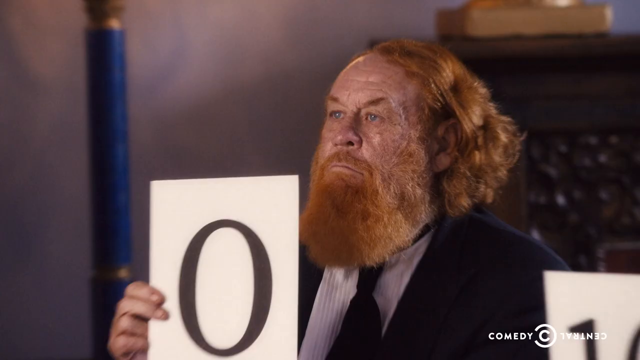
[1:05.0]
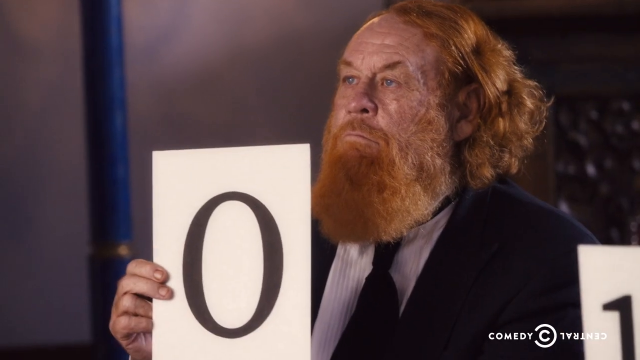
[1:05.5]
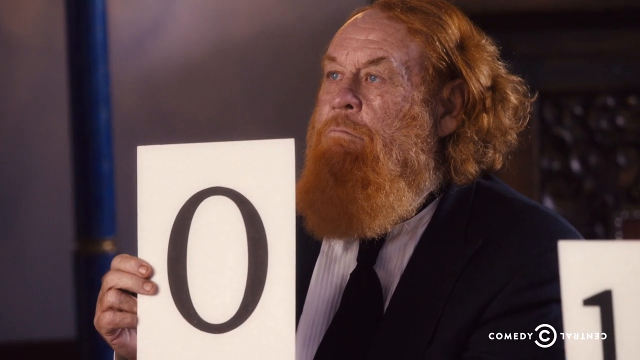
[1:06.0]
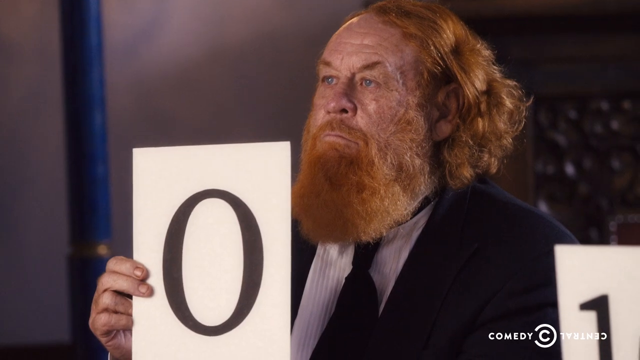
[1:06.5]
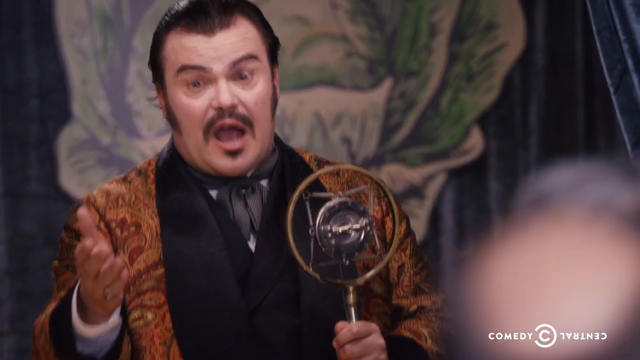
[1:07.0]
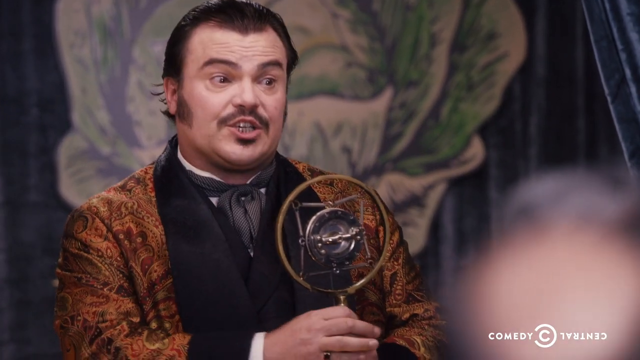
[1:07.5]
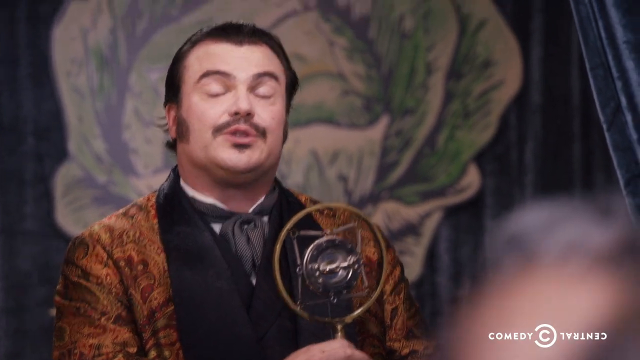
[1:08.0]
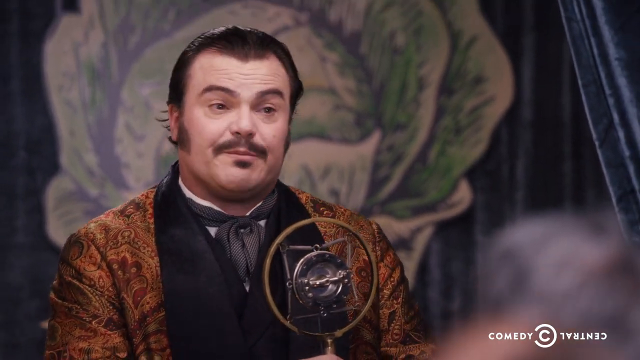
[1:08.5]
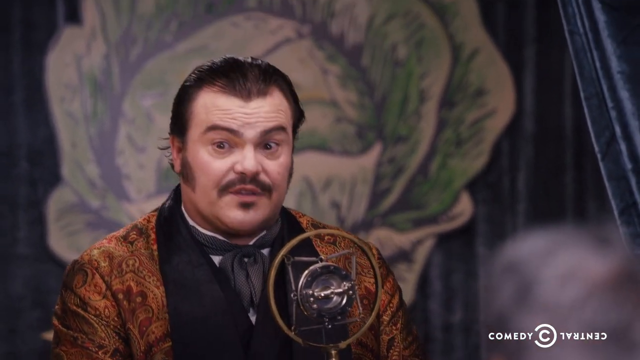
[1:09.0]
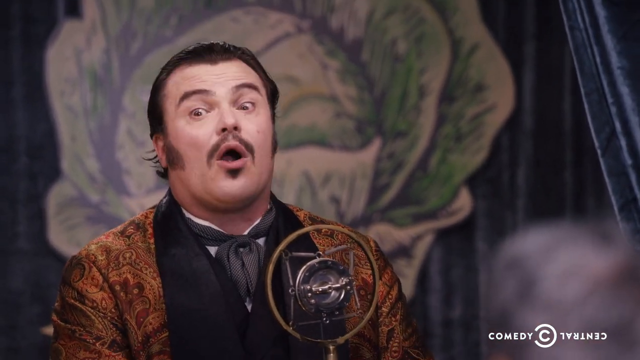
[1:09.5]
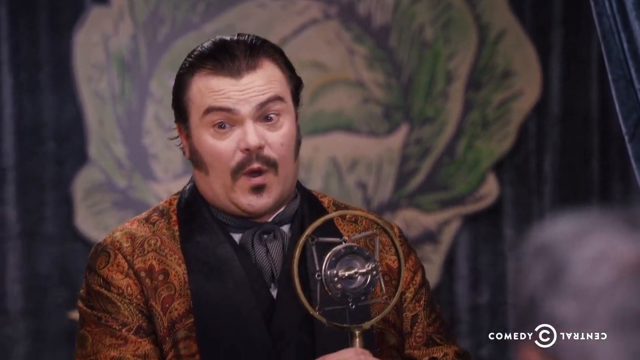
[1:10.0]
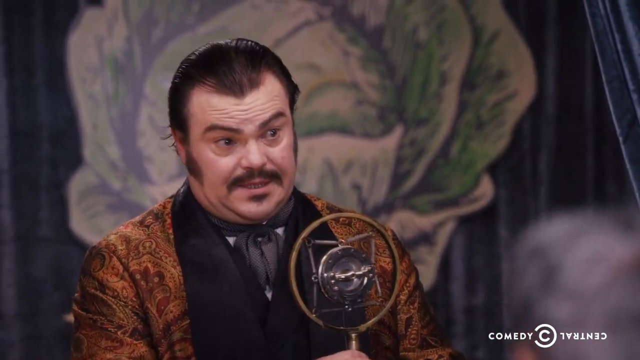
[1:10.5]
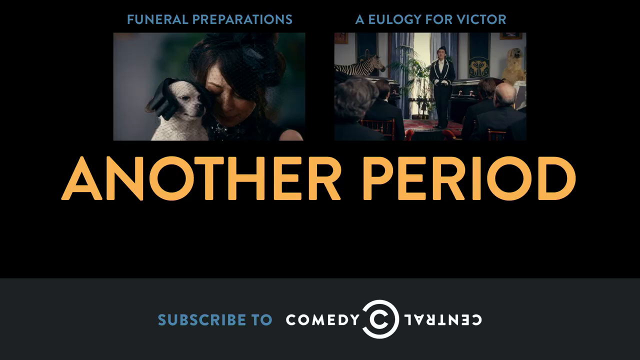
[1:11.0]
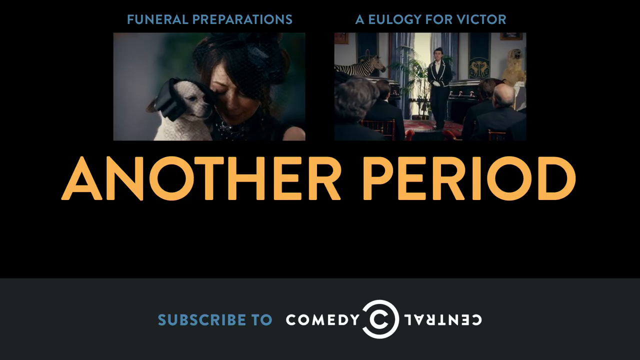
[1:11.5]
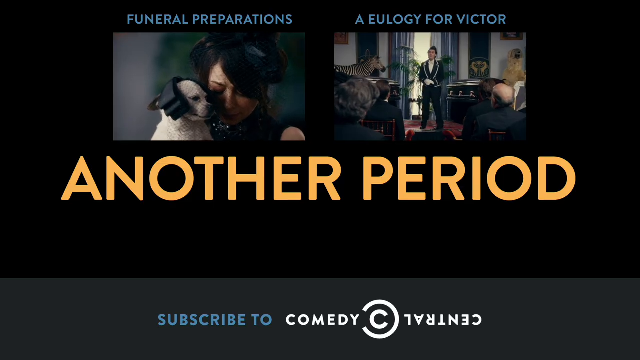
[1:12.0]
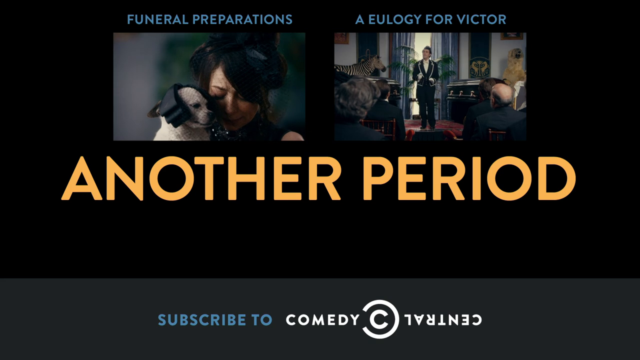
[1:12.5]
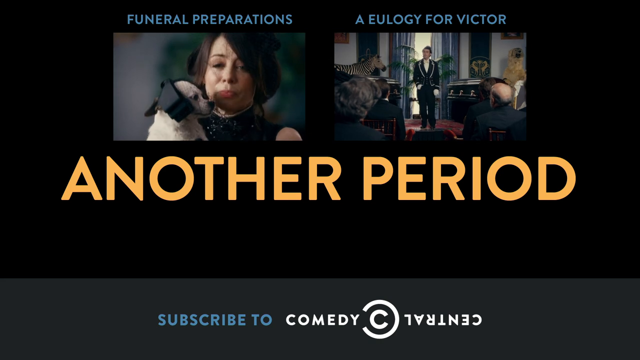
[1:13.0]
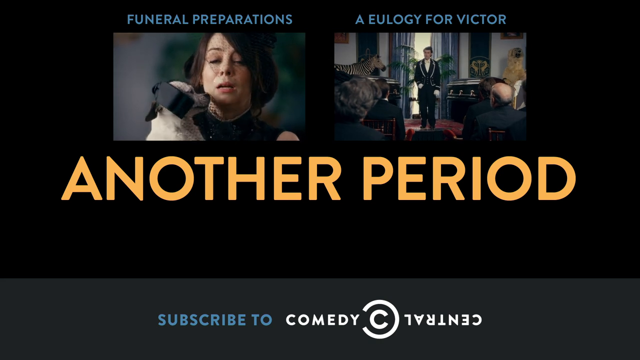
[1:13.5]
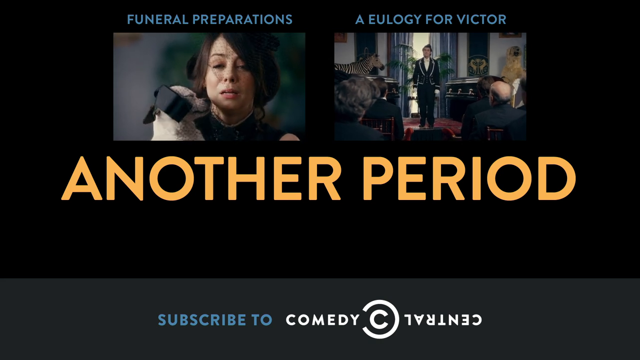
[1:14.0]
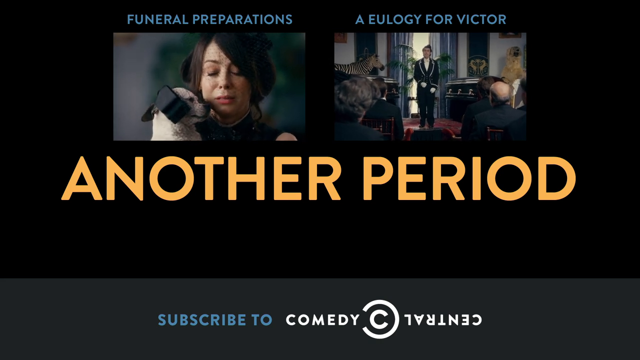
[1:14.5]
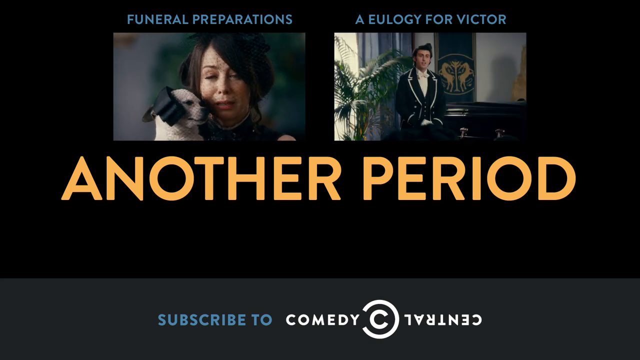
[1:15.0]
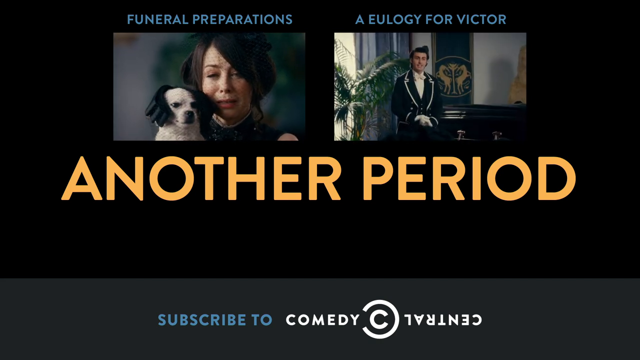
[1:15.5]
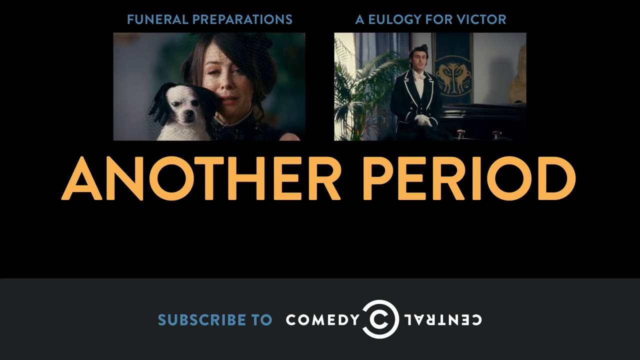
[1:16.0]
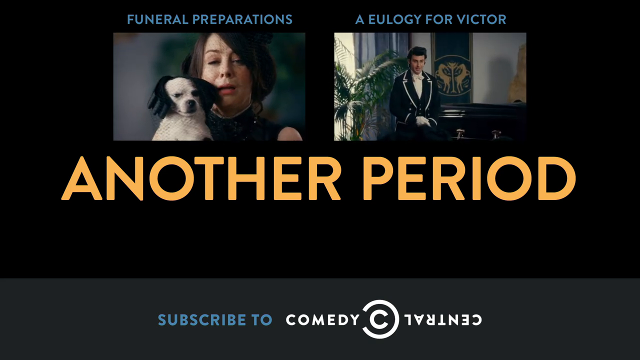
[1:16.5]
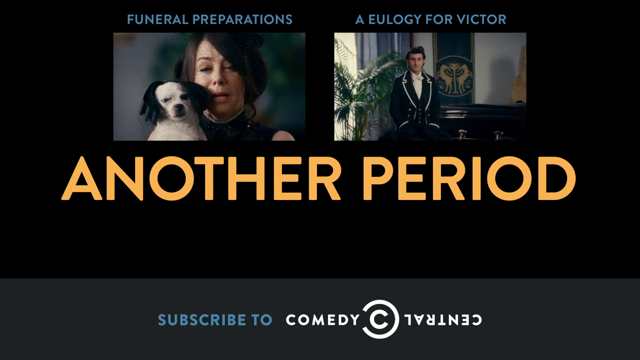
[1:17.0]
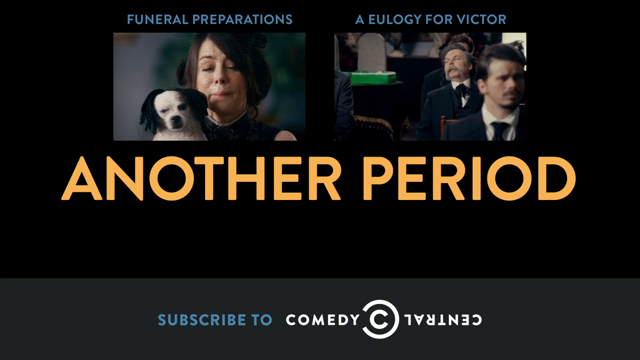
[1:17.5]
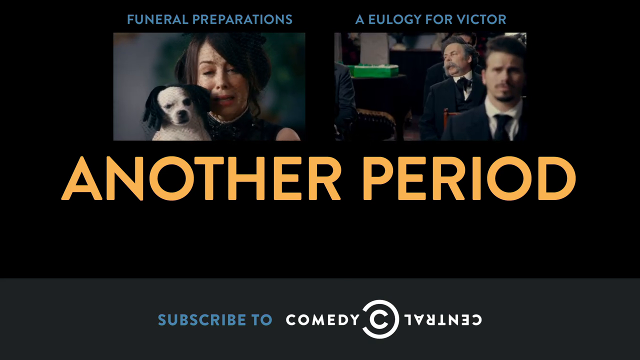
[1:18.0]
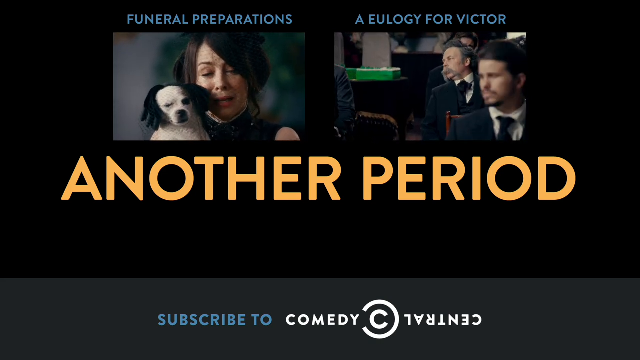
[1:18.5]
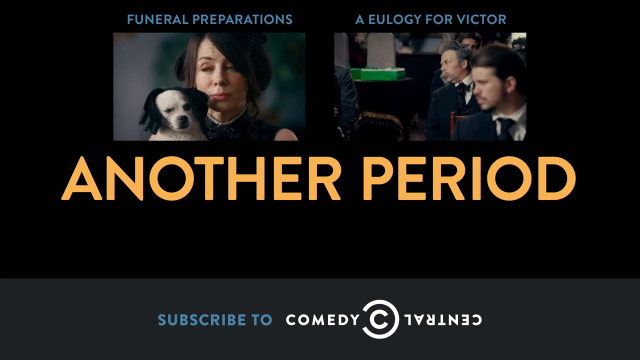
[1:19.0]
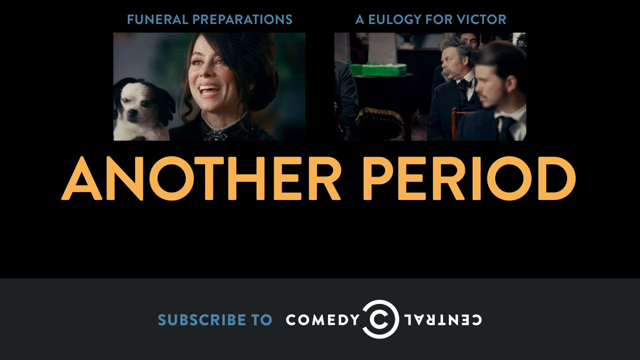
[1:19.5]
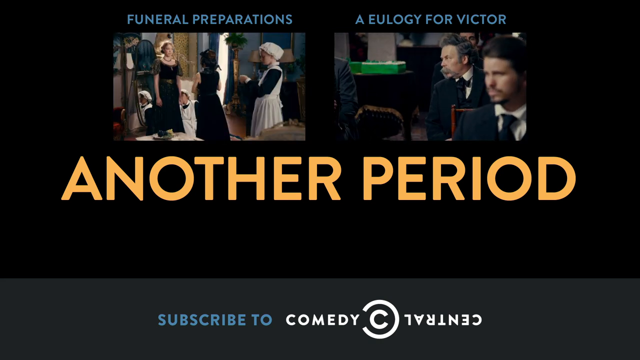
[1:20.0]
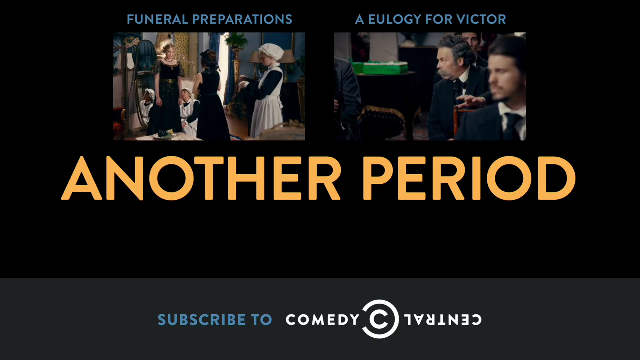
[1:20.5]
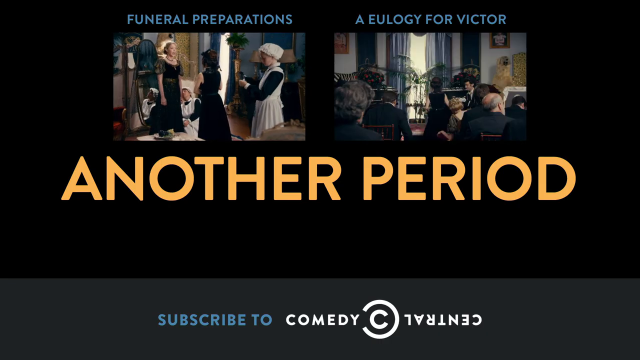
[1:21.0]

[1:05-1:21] The same program continues, and Jack Black appears in it, possibly as a guest judge, though that is unclear. The show's aesthetic is still predominantly Victorian, and the graphics show it is a Comedy Central show. A graphic on the screen says "another period"; it is unclear whether that is the name of the show or another show being promoted. The show has an audience as well as acts that are competing.